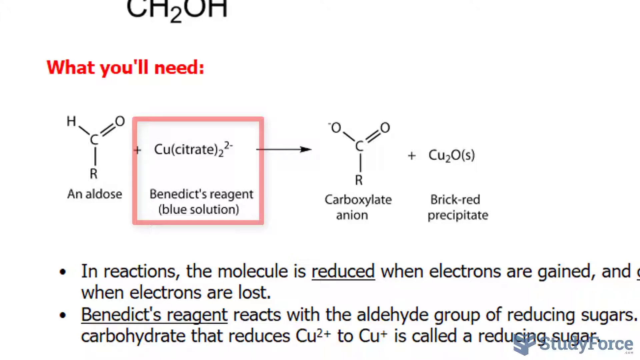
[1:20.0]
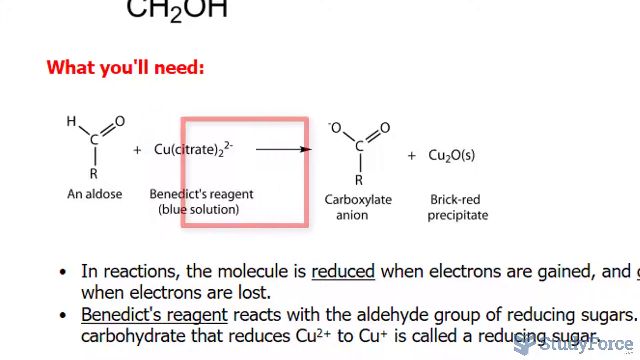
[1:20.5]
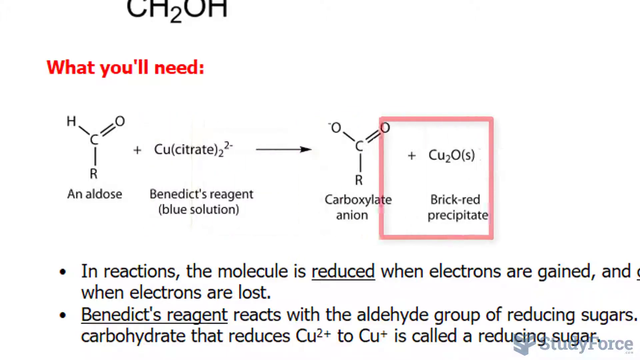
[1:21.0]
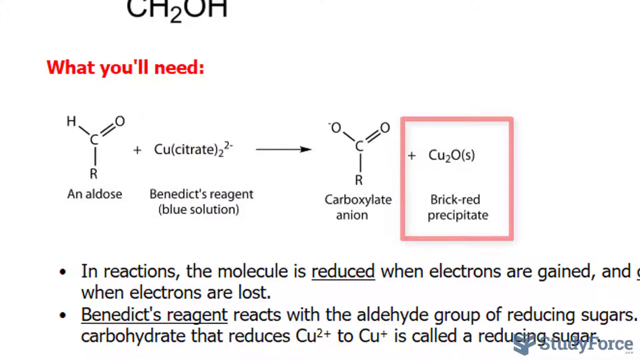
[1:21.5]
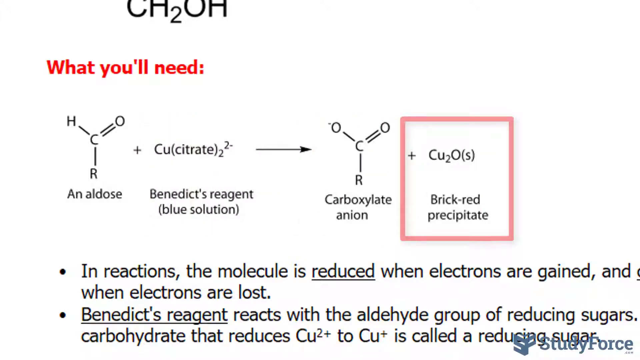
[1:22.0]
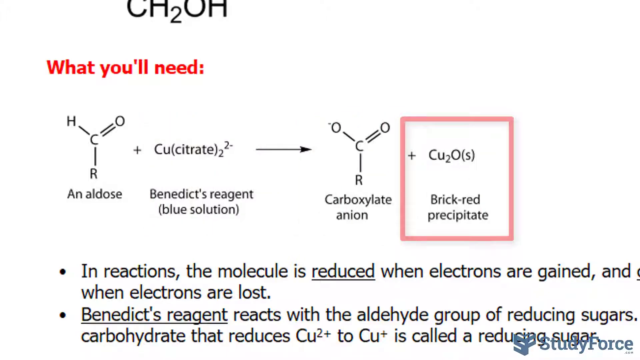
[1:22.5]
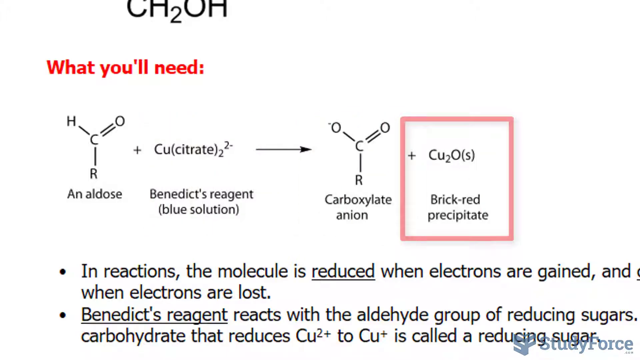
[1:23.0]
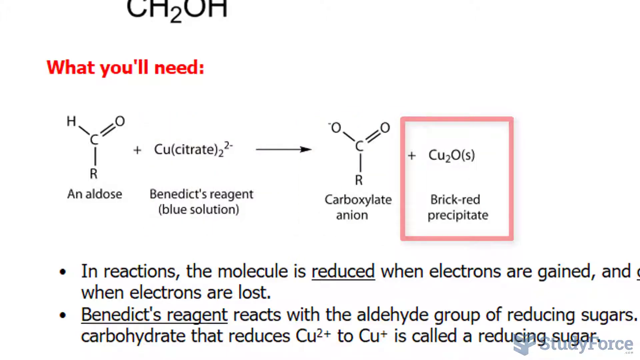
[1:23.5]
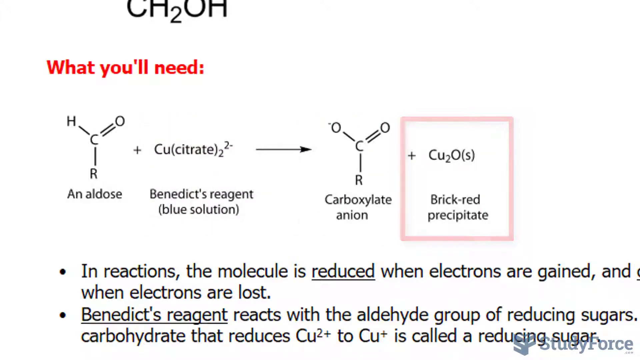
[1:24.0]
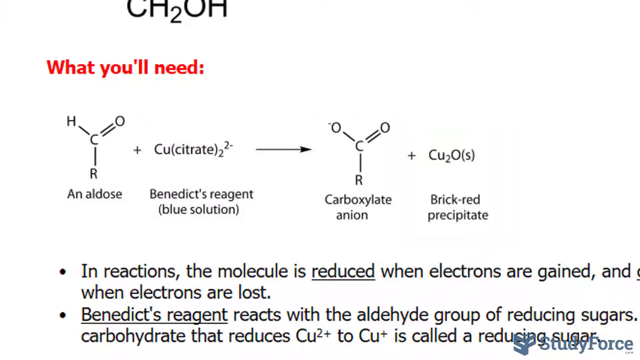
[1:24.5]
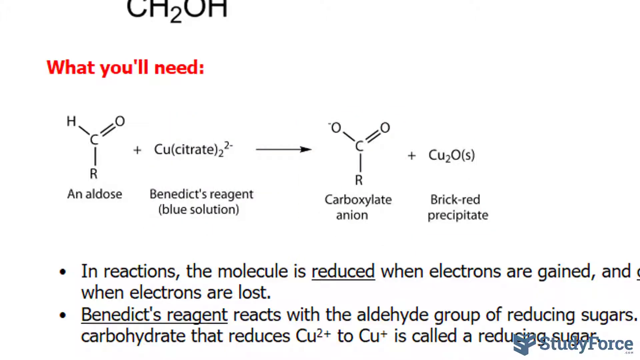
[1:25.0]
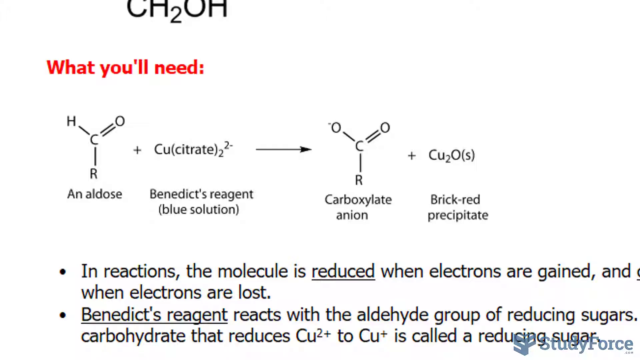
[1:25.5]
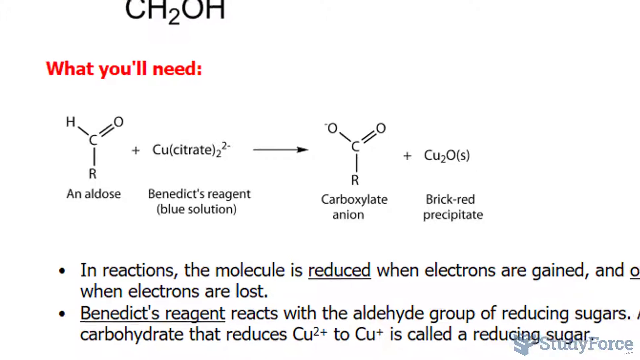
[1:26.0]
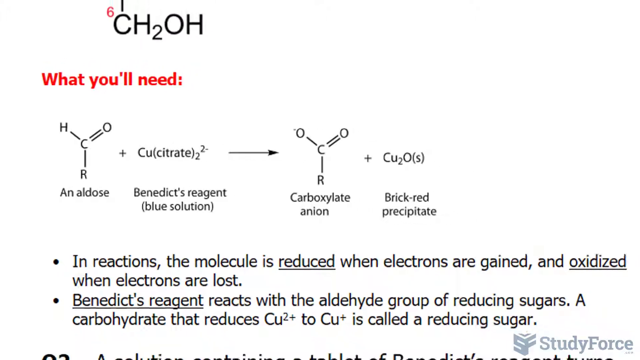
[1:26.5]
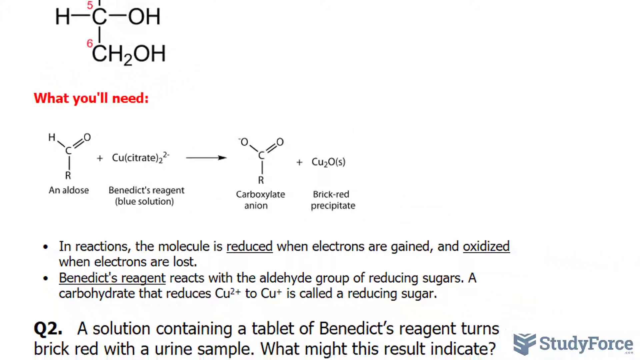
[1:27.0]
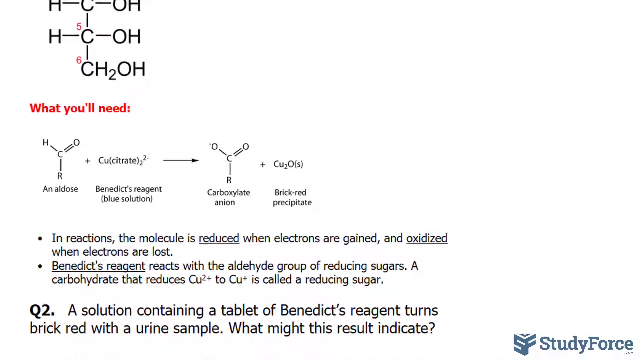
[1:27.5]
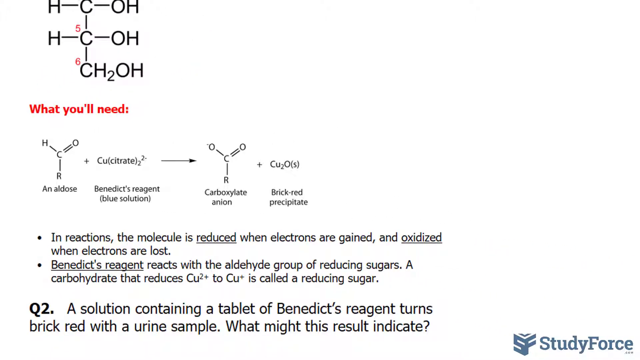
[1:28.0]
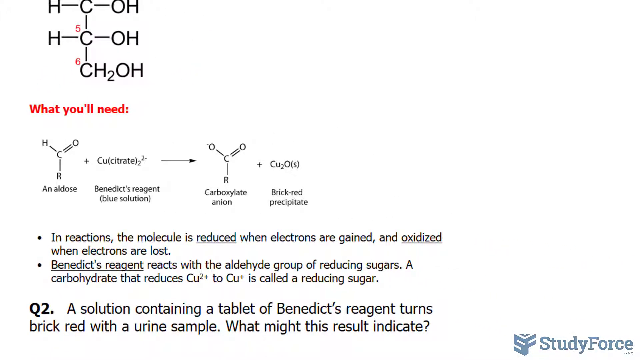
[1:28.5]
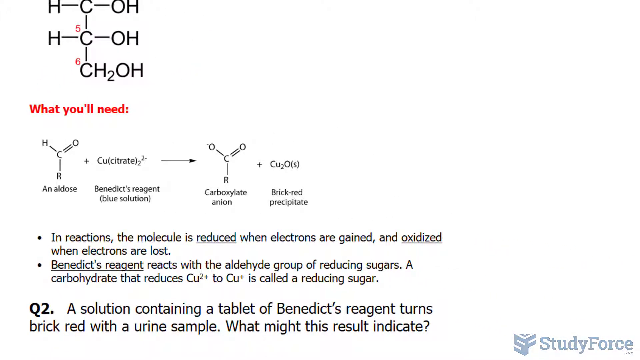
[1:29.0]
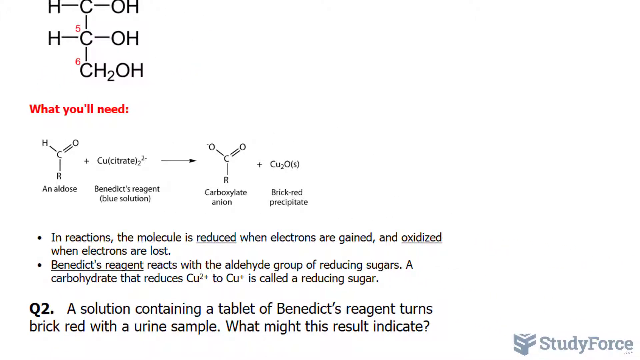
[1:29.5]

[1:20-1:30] Benedict reagent is highlighted in a square box, and then a red square box highlights brick red precipitate. Underneath is the explanation stating that in reactions the molecule is reduced when electrons are gained and oxidized when electrons are lost. The view then zooms out so that question 2 is clearly visible: a solution containing a tablet of Benedict reagent turned brick red with a urine sample; what might this result indicate?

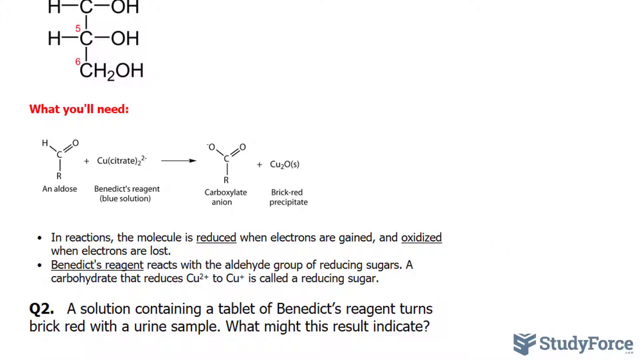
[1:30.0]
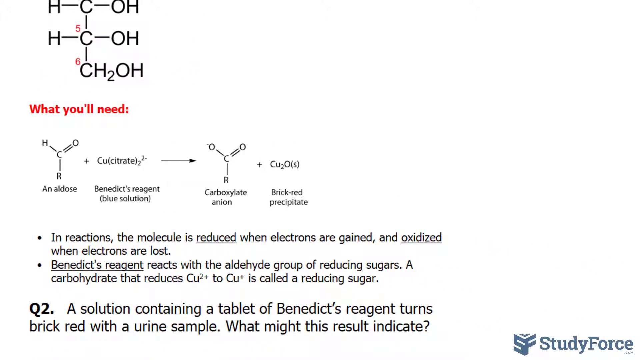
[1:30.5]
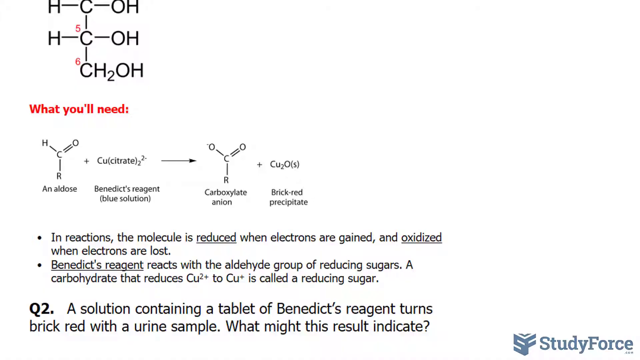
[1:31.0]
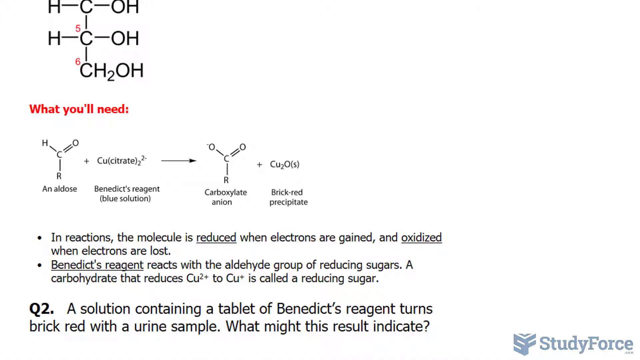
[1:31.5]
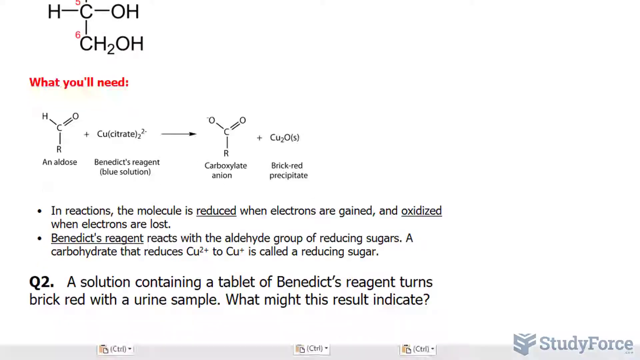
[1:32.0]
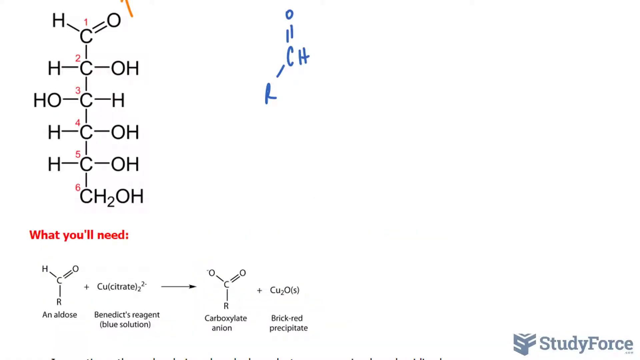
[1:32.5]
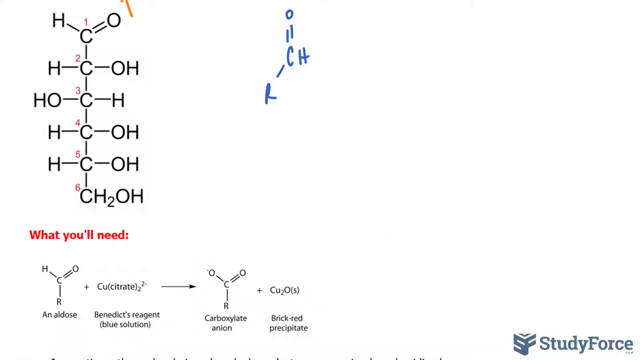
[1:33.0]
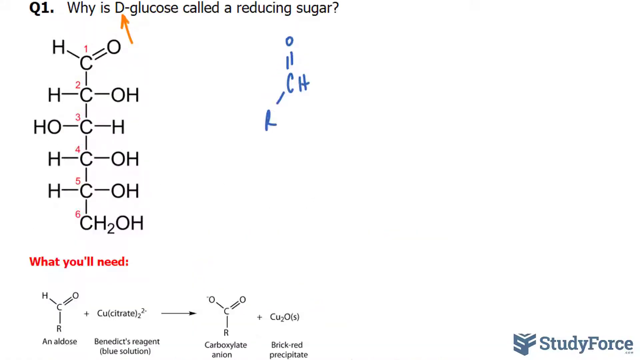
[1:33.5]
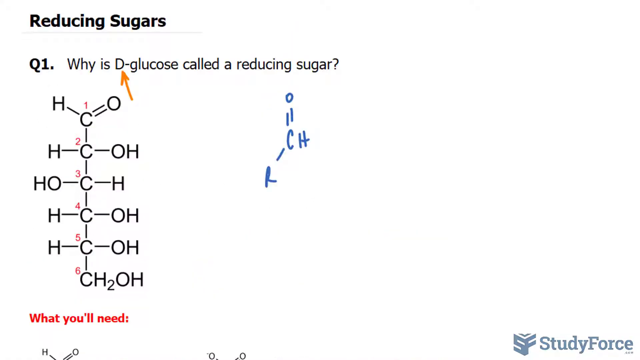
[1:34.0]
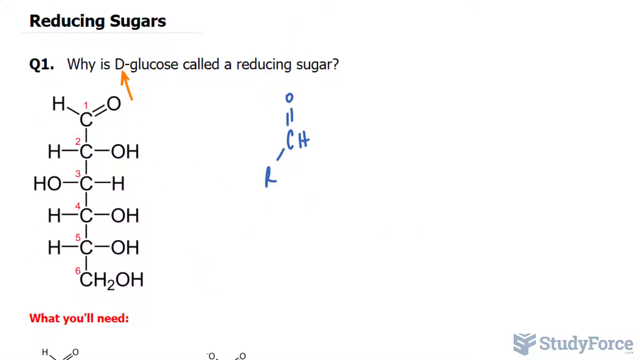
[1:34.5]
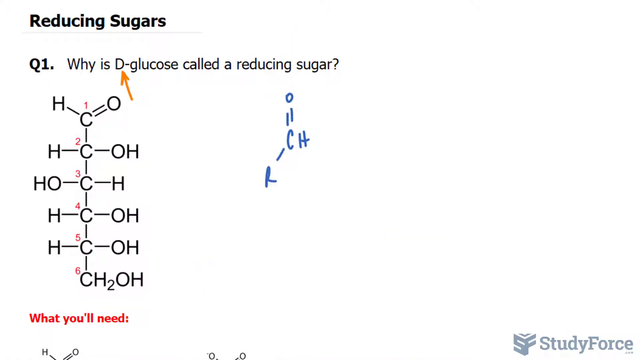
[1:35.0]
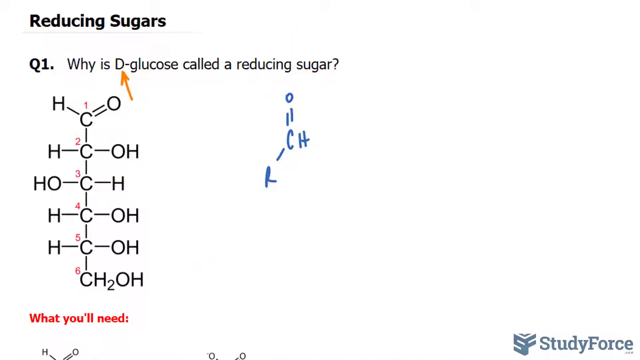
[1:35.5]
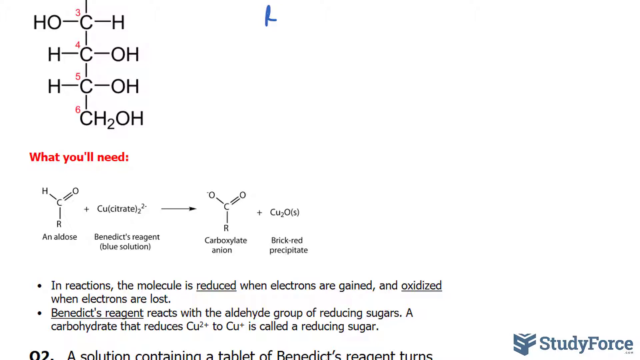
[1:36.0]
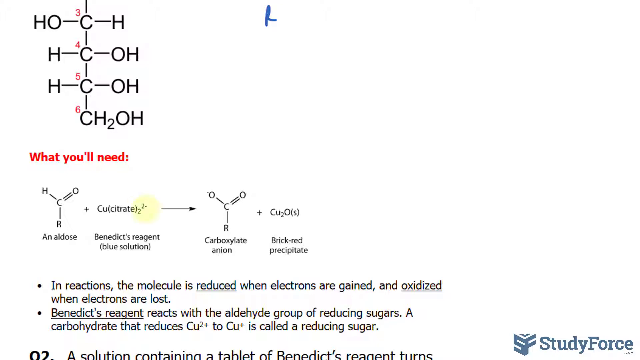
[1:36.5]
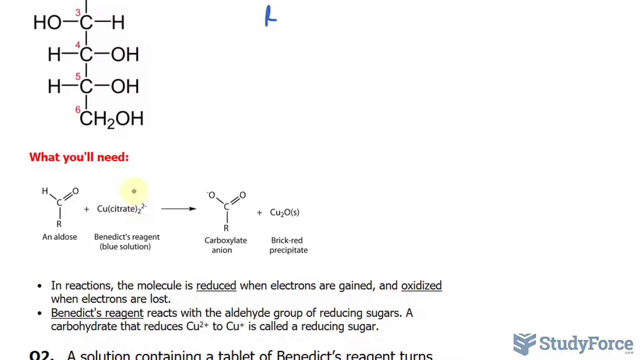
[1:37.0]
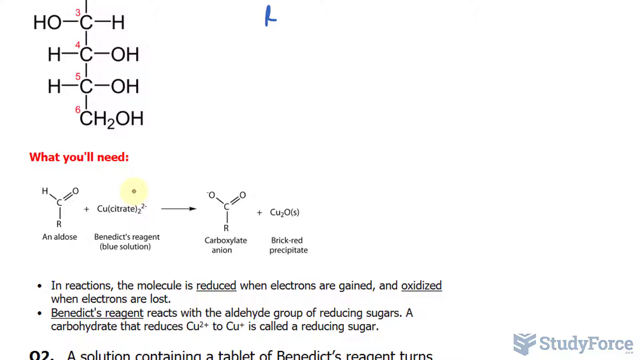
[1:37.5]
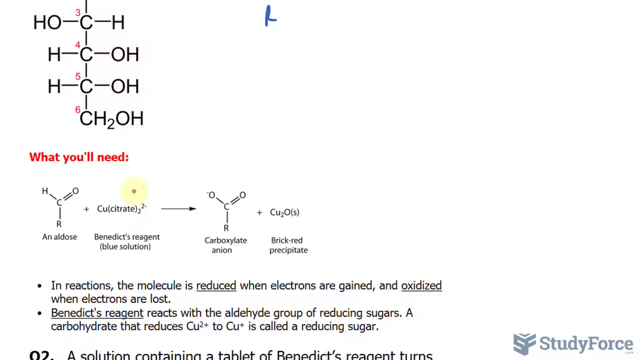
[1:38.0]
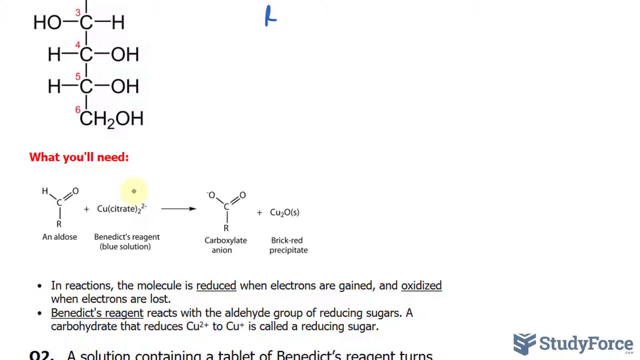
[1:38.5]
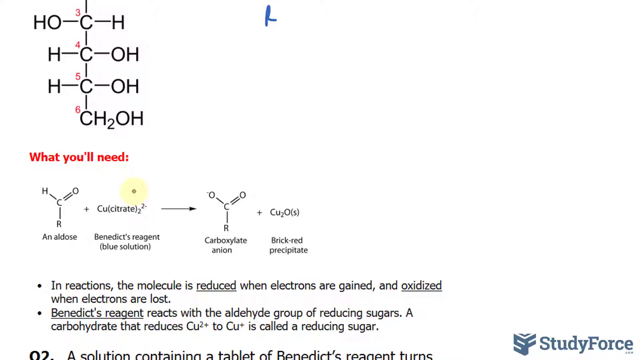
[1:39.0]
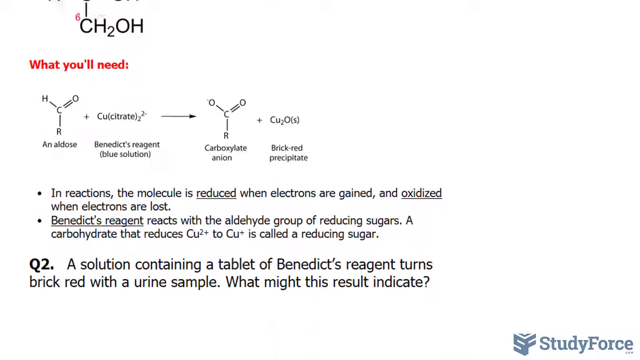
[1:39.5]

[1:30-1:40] D-glucose is highlighted, and then the highlight moves down almost to the bottom of the page to Benedict's reagent. The highlight is a yellow round circle, while an orange arrow points to D-glucose. The page scrolls up and down, showing all its content: it starts with reducing sugars, shows the equation with a blue equation on the side, shows "what you will need" in red highlights, and then the equation and the explanation of the reaction, which mentions Benedict's reagent reacting with the aldehyde group of reducing sugars and that a carbohydrate that reduces Cu2+ to Cu+ is called a reducing sugar.